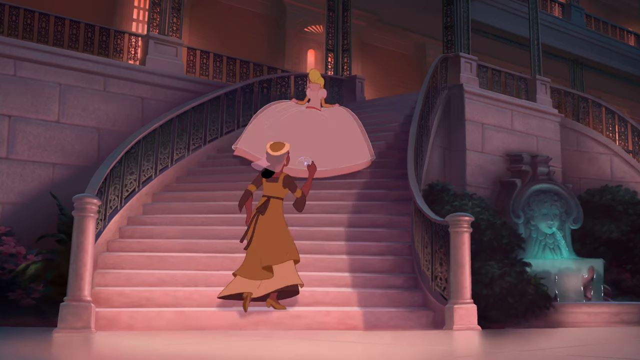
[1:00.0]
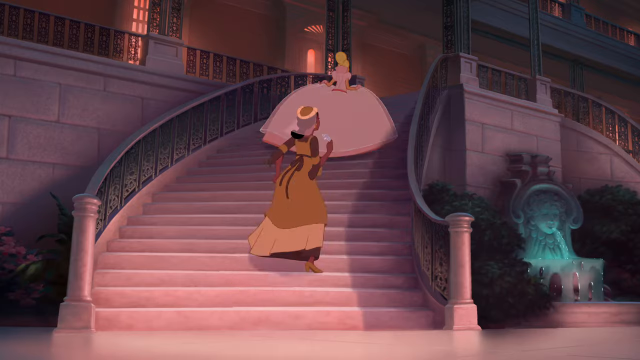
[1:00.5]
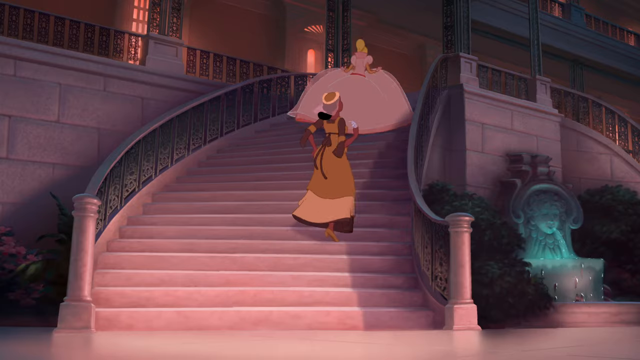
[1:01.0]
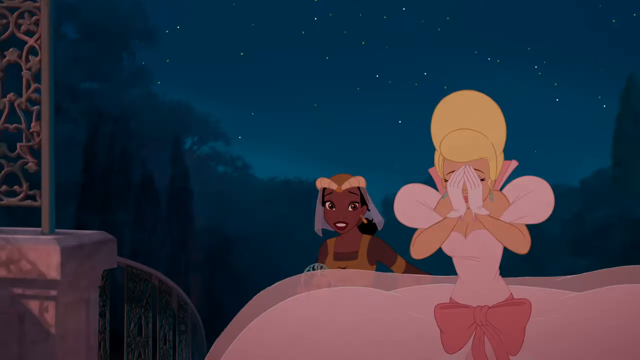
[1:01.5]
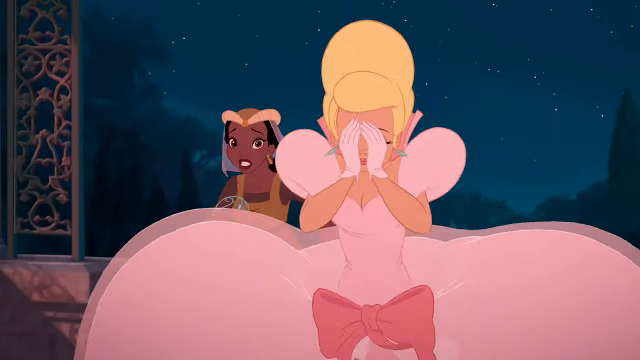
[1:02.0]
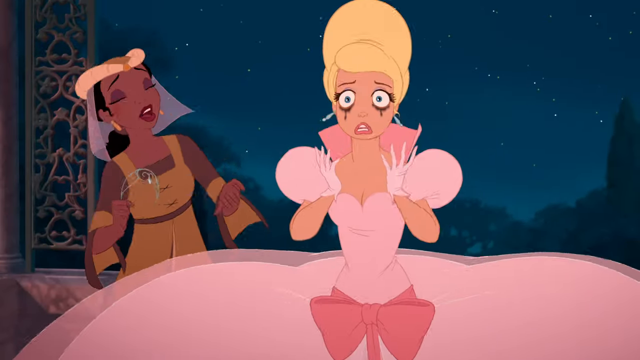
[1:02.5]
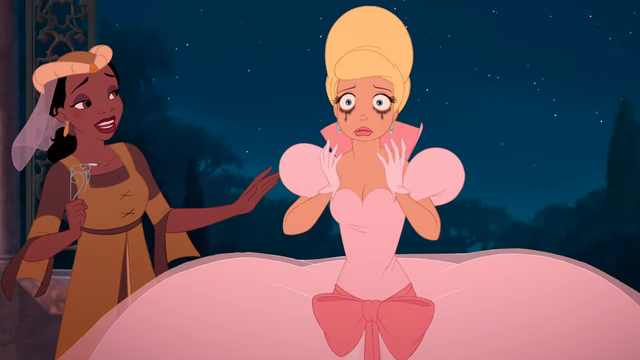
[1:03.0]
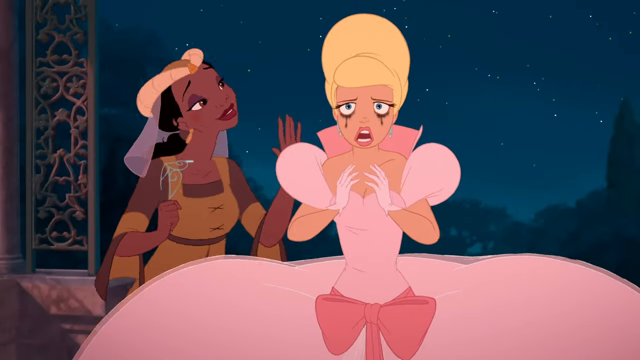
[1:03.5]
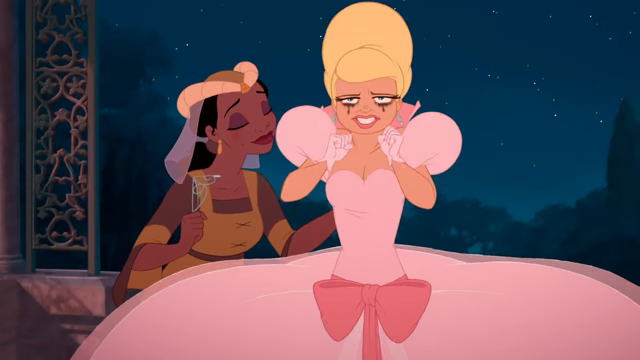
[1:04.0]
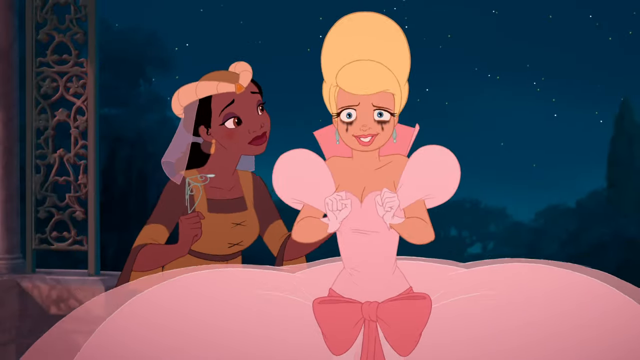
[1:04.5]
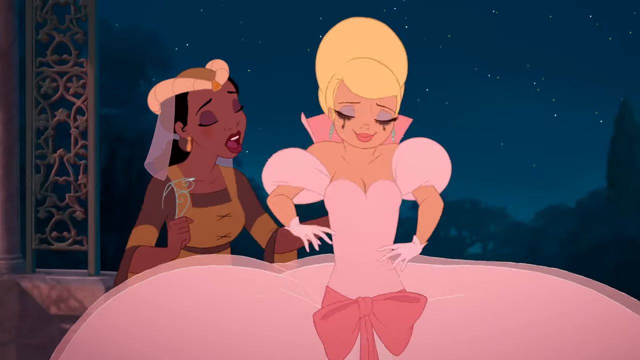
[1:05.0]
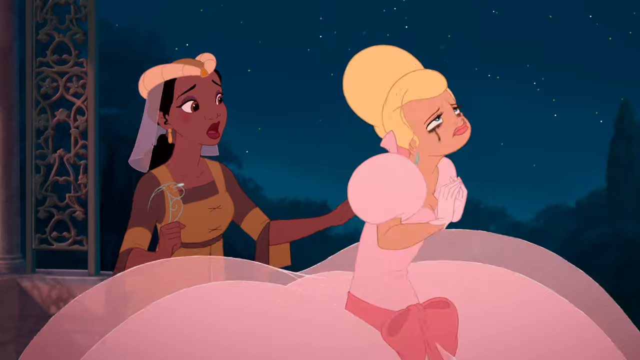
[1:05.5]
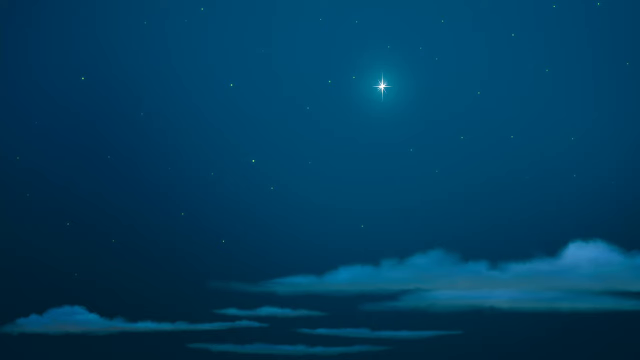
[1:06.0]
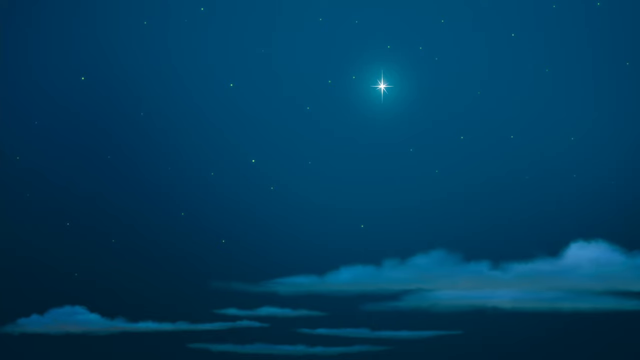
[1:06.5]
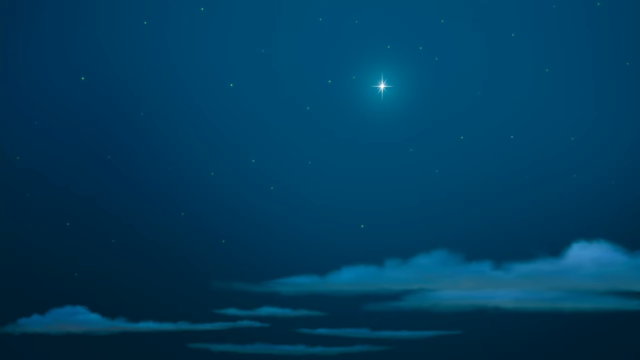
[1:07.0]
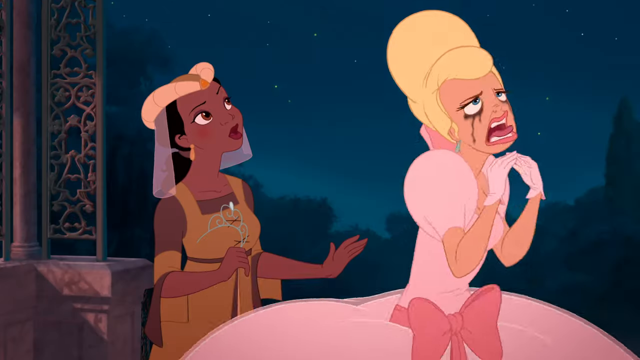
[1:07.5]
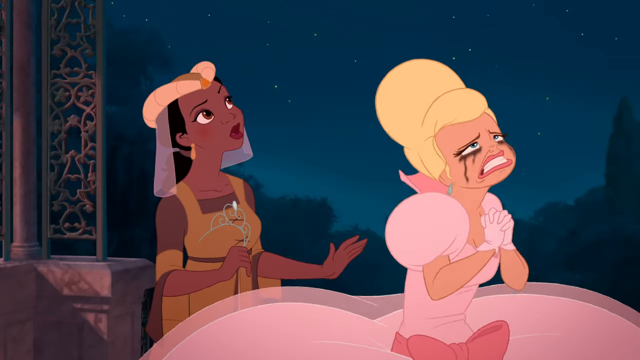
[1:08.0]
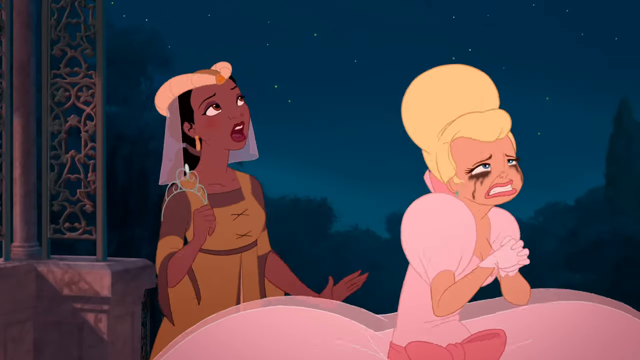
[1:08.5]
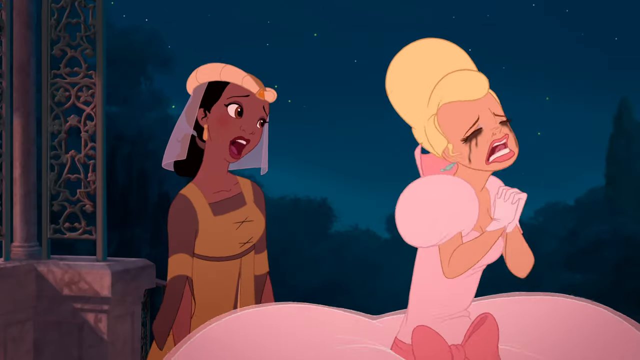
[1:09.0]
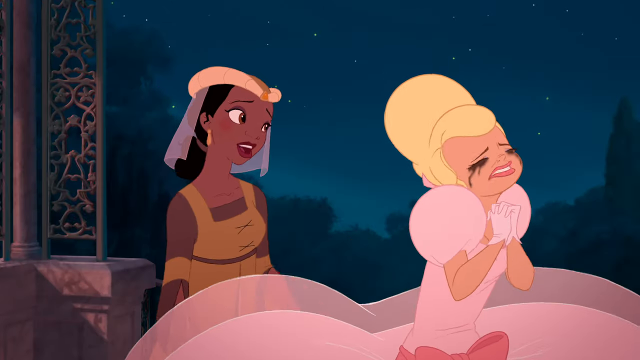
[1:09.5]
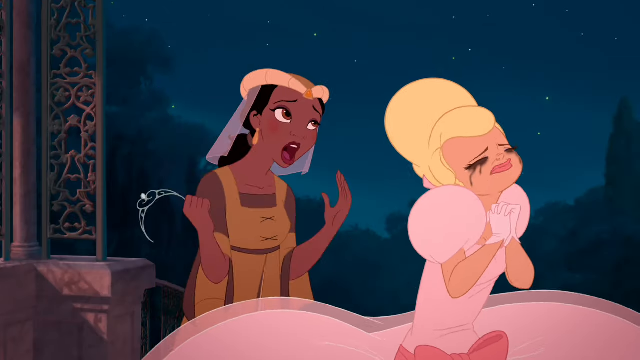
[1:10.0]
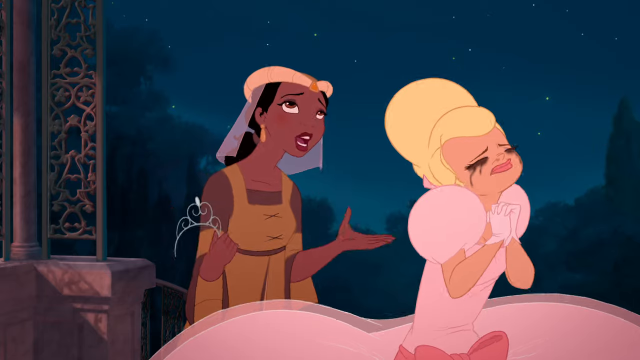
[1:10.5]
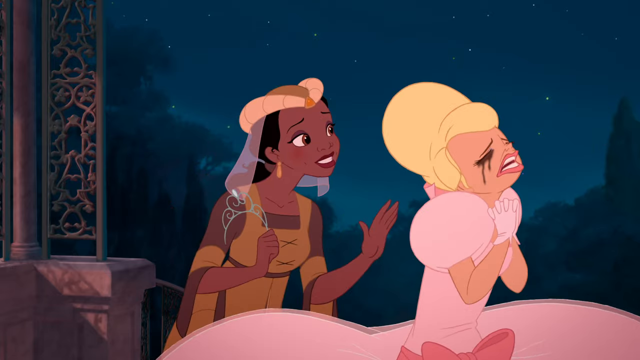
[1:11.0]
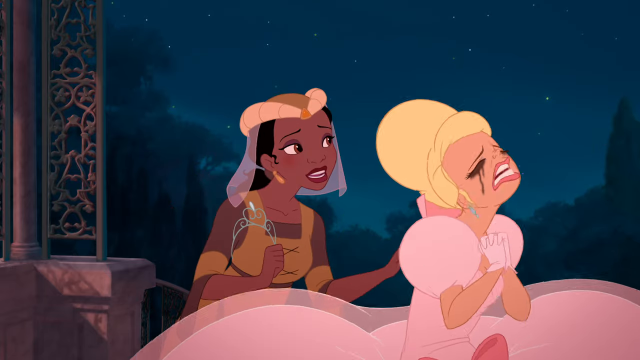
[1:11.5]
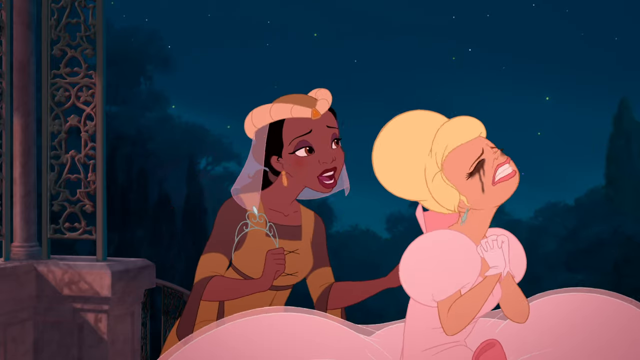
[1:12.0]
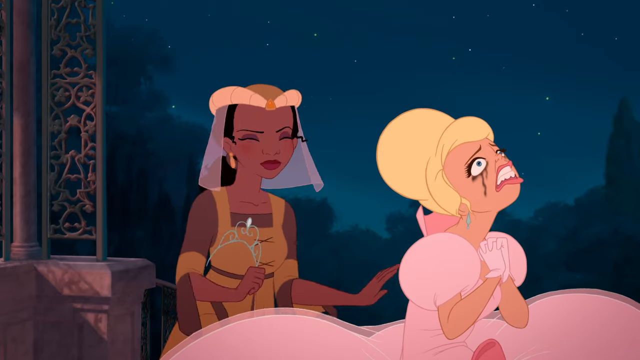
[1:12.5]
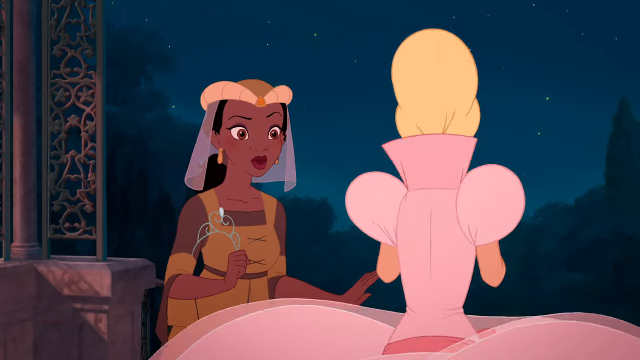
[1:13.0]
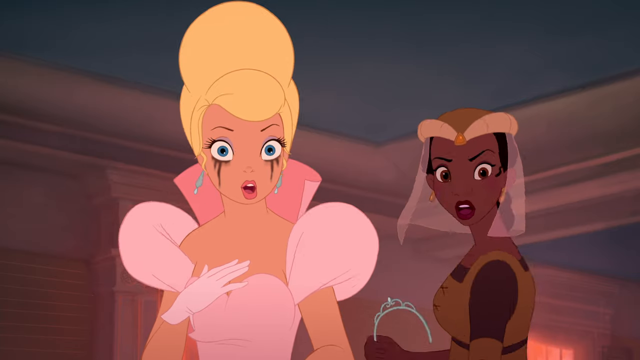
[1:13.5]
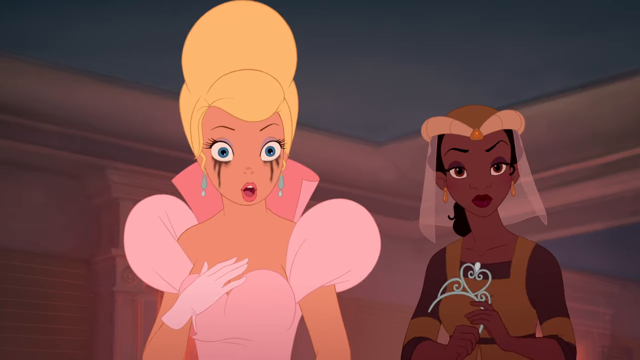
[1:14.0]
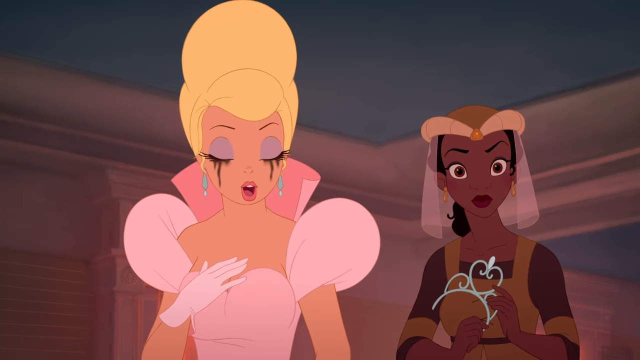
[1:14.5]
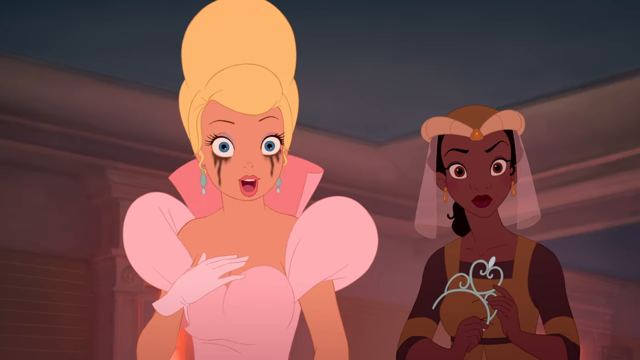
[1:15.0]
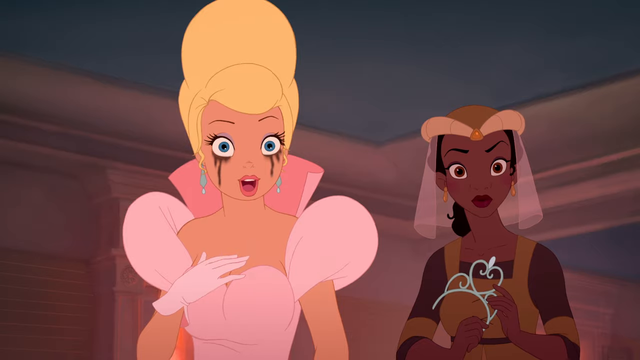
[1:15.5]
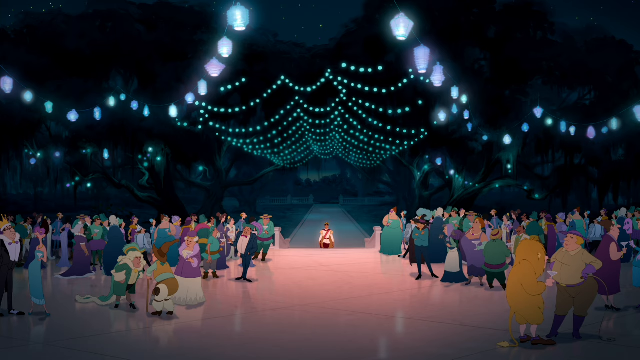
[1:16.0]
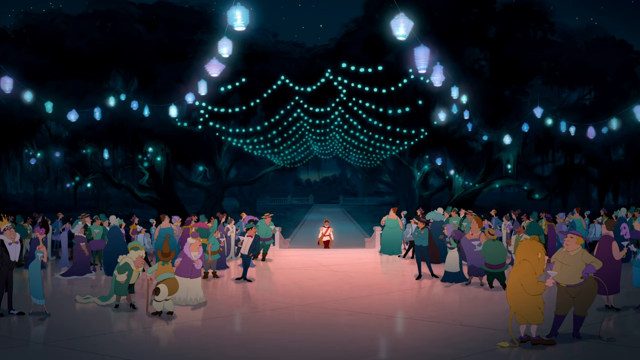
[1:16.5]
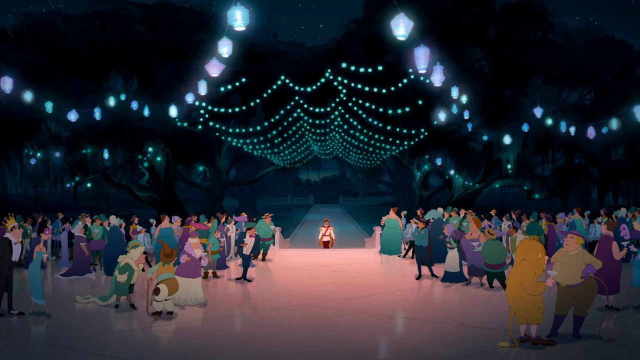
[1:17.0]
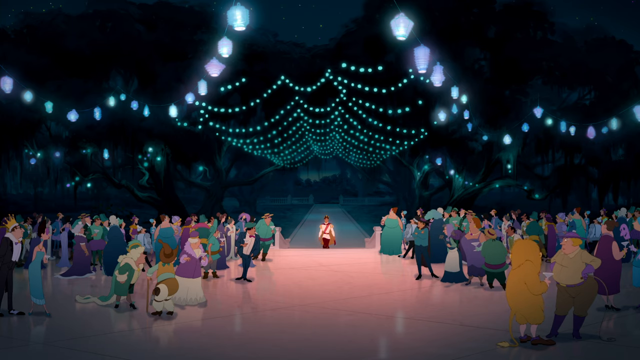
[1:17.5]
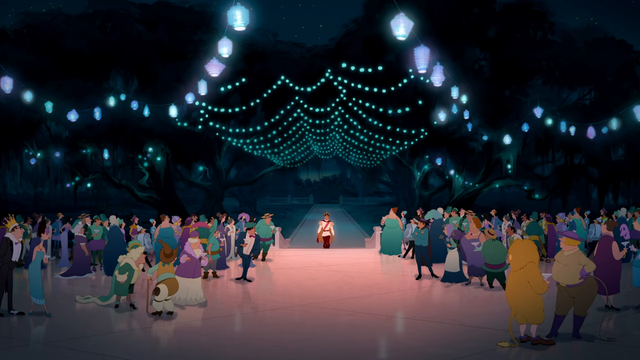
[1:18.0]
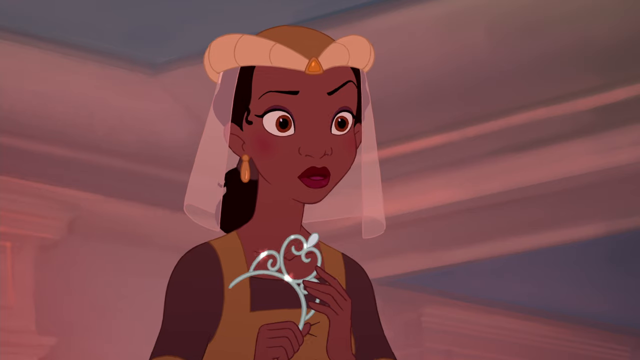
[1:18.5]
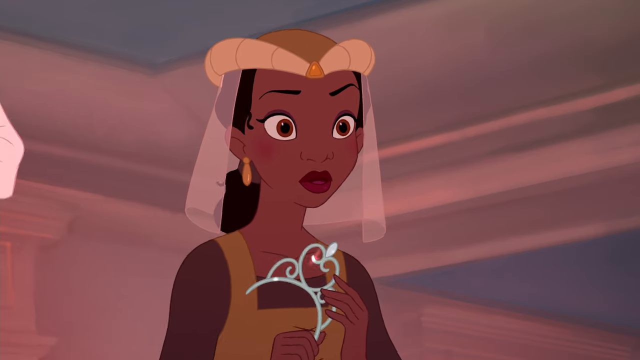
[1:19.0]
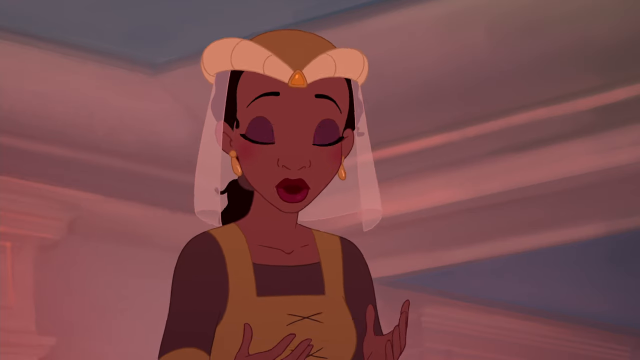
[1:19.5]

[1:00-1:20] The woman in the large pink ball gown, with a blonde updo, rushes up the stairs of a mansion, while a darker-skinned woman in a brown dress follows behind her from the base of the stairs, because the woman in the ball gown has tossed her tiara to the snack worker. They reach the top of the stairs, and the woman in the ball gown is so distraught that she begins crying; her eyes are wide, with tears leaking from both. She touches her fingertips together and then balls her hands up near her chin, while the dark-skinned woman puts a hand on her back and rubs it soothingly. The woman in the ball gown smiles briefly, but then turns to the right of the screen, still crying and frowning, and sinks to the ground again. She looks up and sees a single bright star in the sky with some clouds below it. Sobbing, she clasps her hands beneath her chin as if praying, seemingly making a wish on the star, as she continues to cry and the snack worker continues to soothe her. Suddenly they both quickly turn around with wide, surprised faces, and off in the distance a man dressed as a prince walks onto the dance floor.